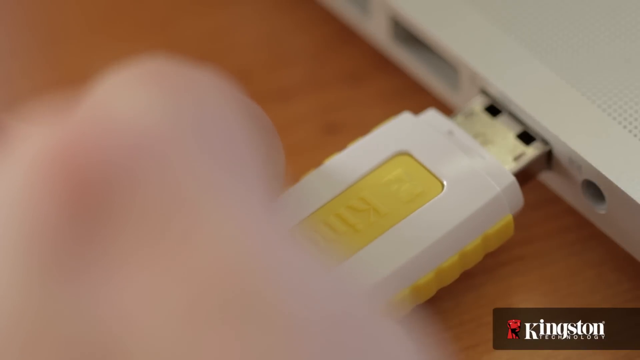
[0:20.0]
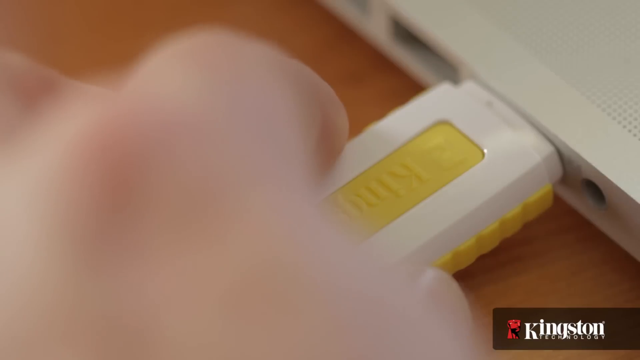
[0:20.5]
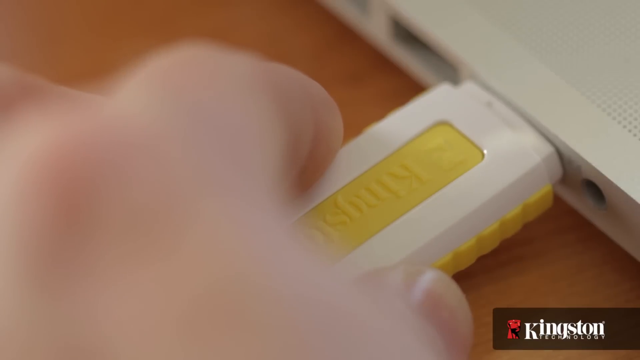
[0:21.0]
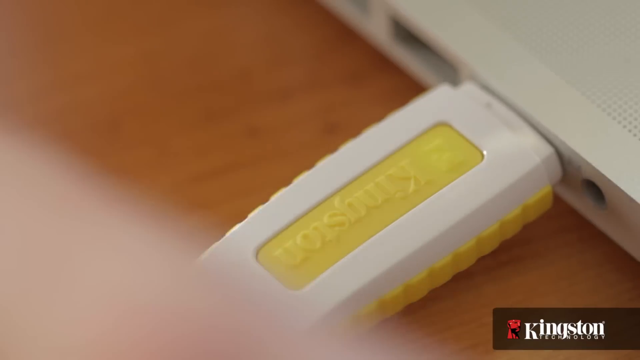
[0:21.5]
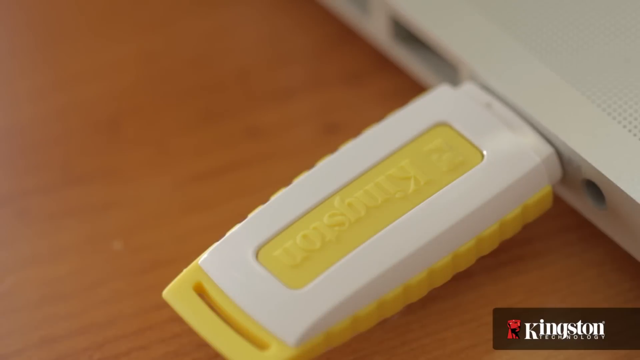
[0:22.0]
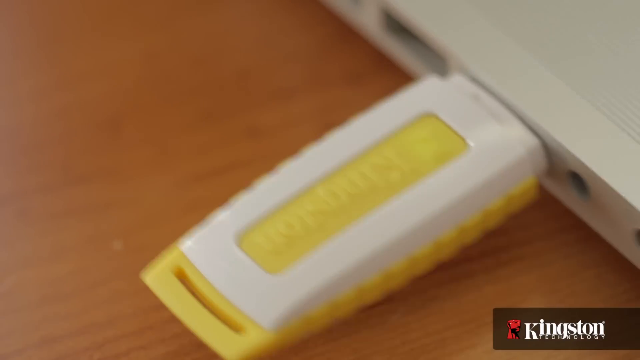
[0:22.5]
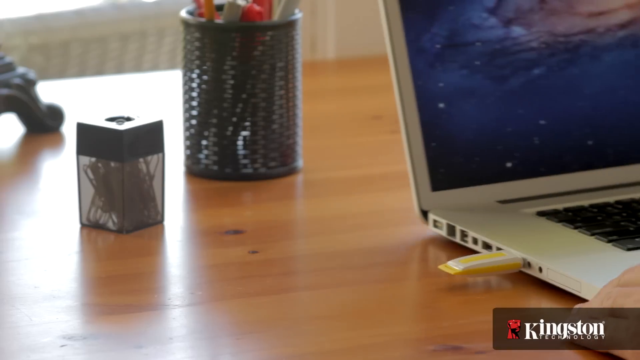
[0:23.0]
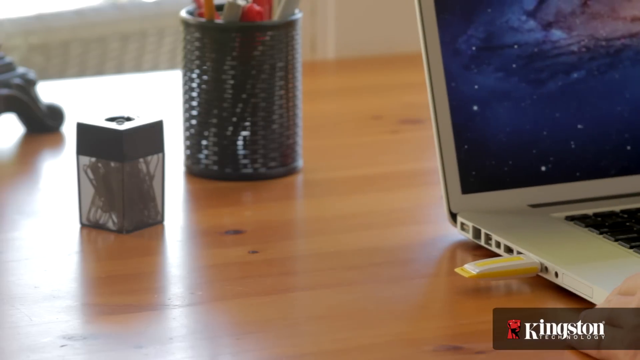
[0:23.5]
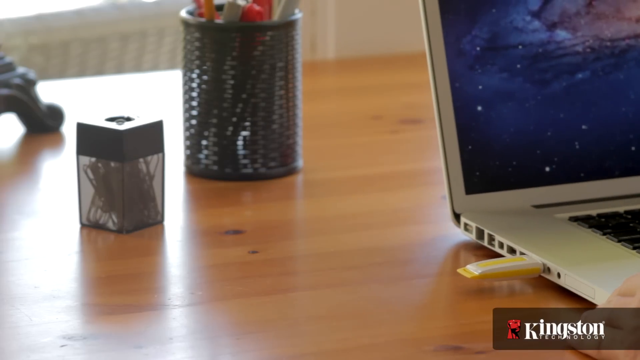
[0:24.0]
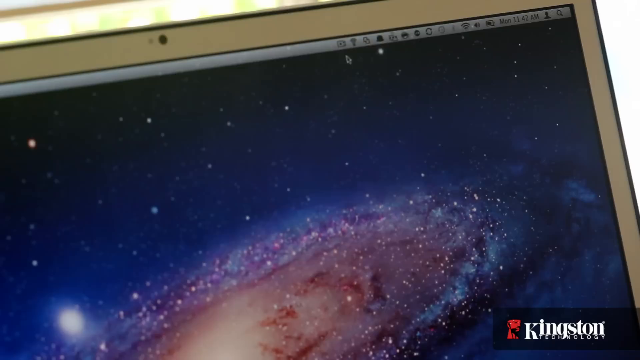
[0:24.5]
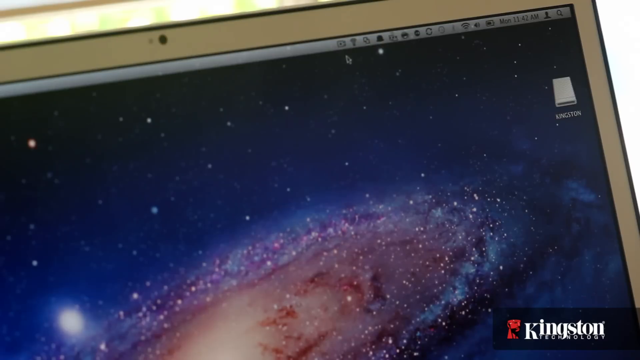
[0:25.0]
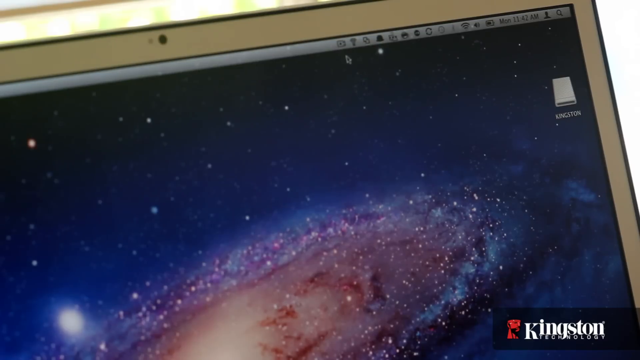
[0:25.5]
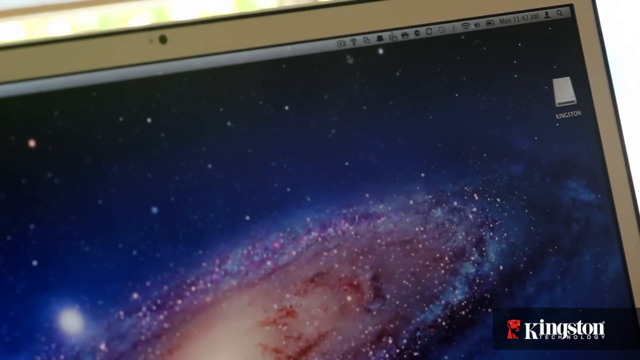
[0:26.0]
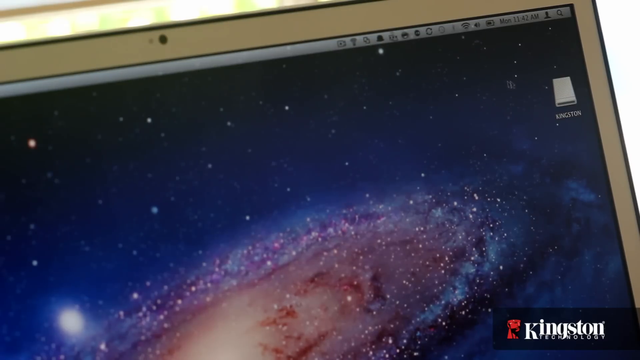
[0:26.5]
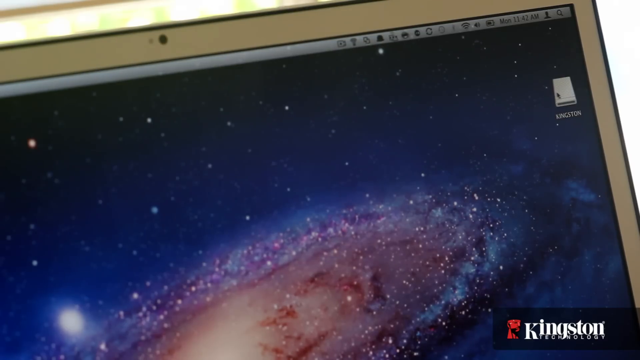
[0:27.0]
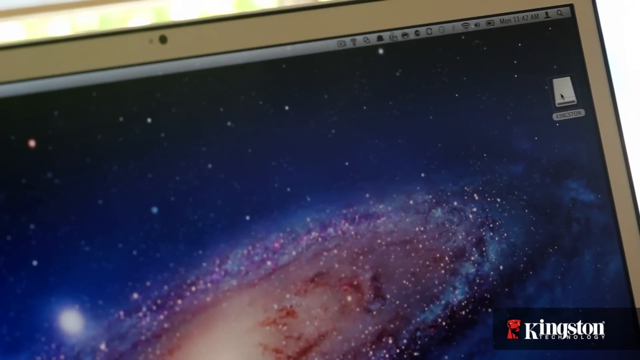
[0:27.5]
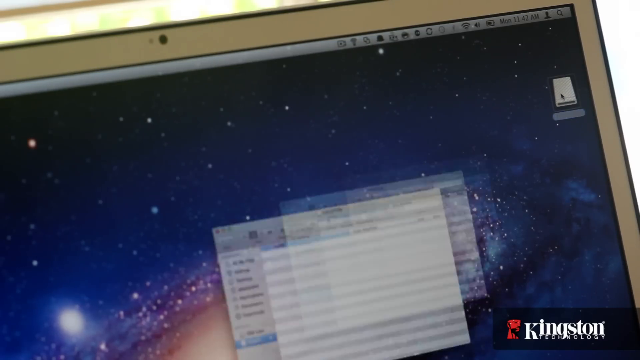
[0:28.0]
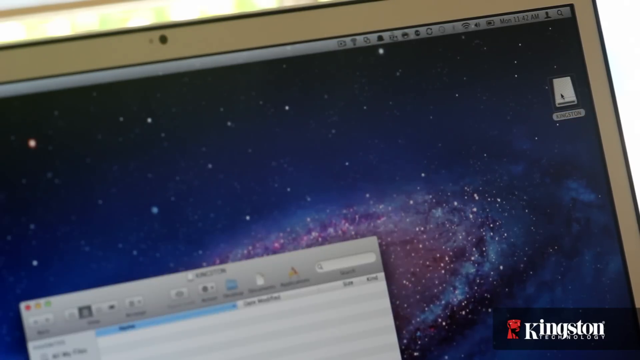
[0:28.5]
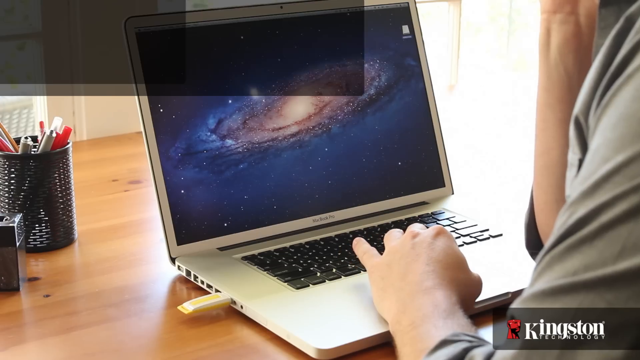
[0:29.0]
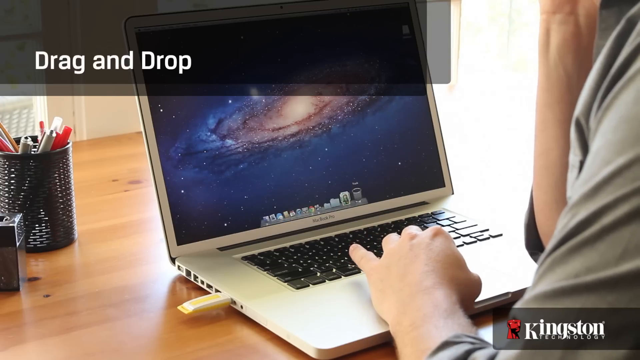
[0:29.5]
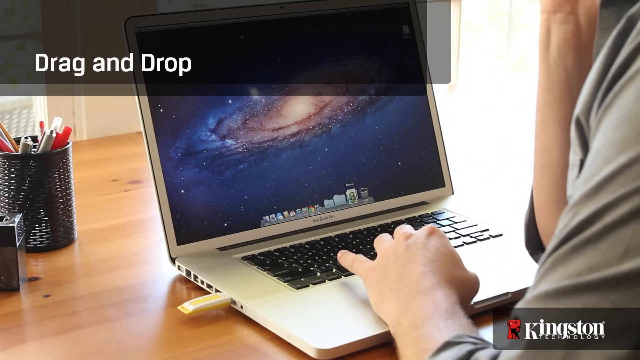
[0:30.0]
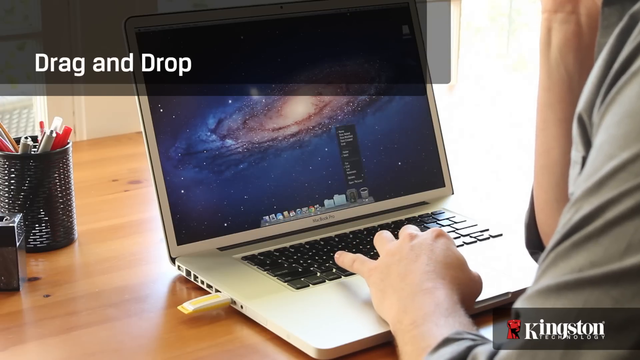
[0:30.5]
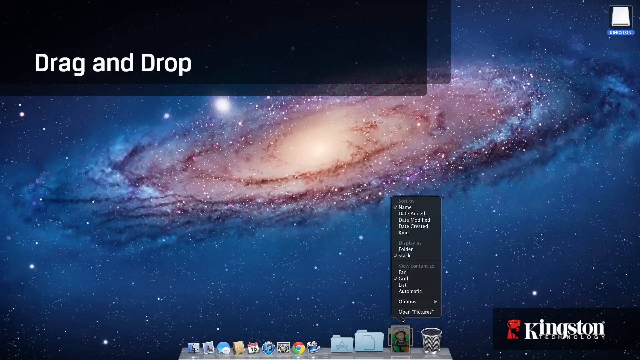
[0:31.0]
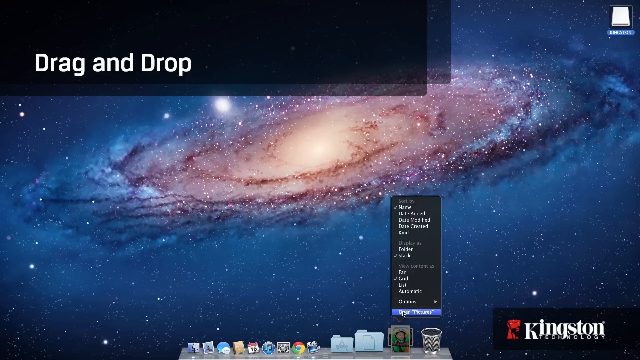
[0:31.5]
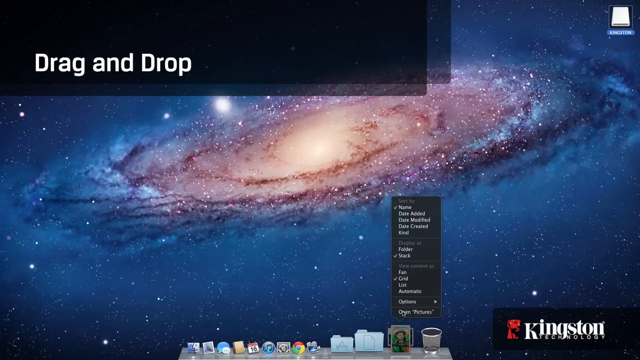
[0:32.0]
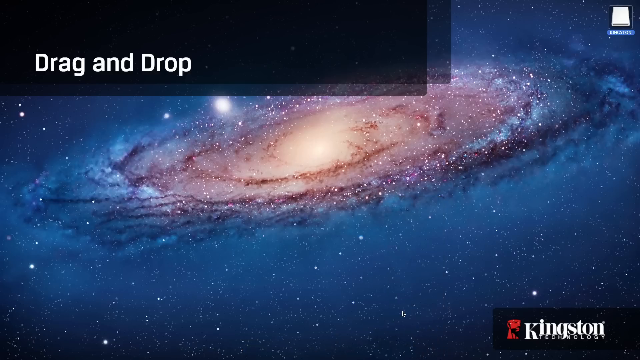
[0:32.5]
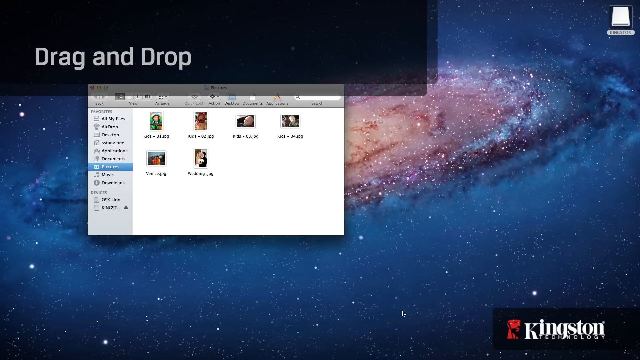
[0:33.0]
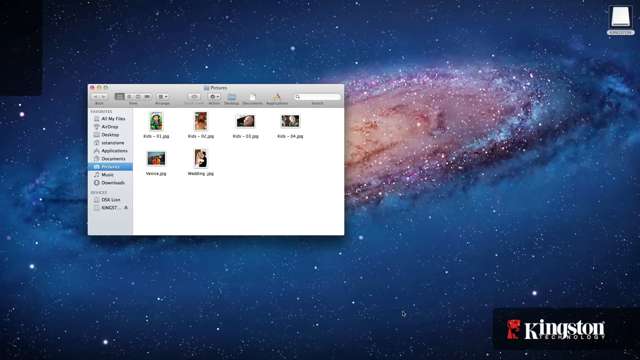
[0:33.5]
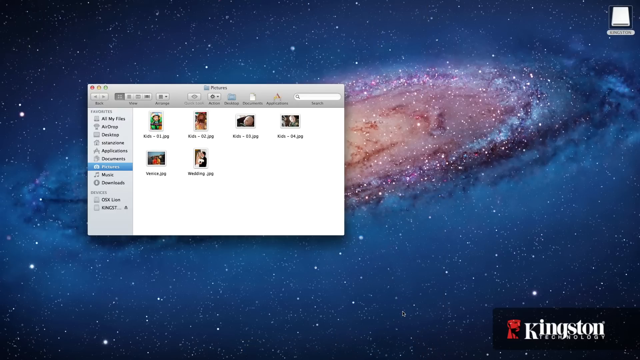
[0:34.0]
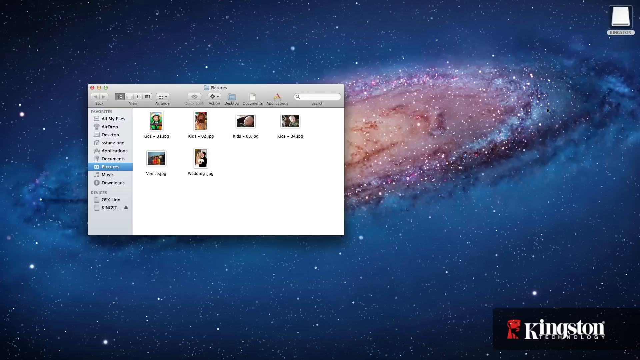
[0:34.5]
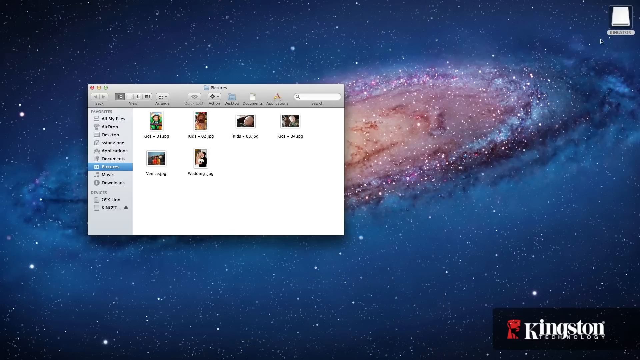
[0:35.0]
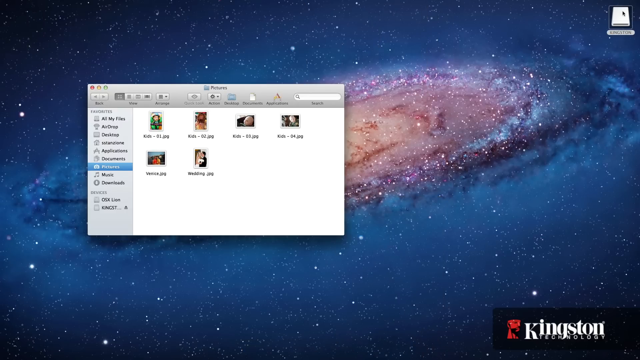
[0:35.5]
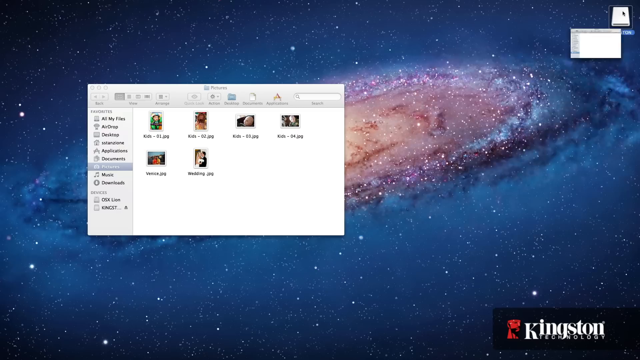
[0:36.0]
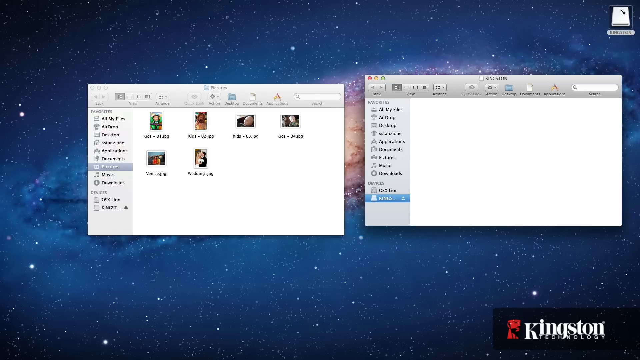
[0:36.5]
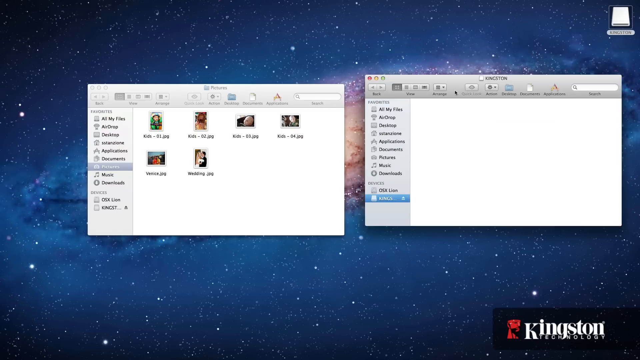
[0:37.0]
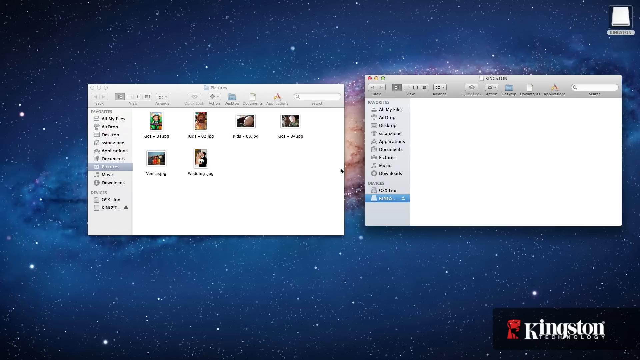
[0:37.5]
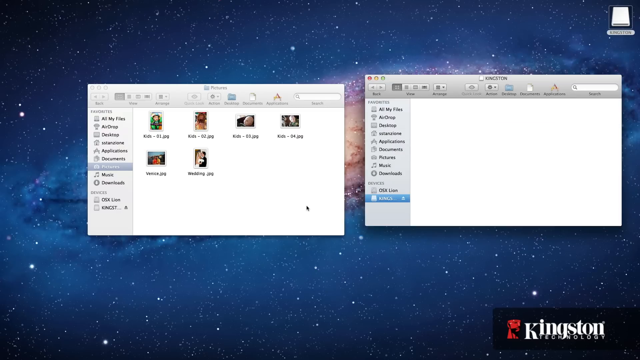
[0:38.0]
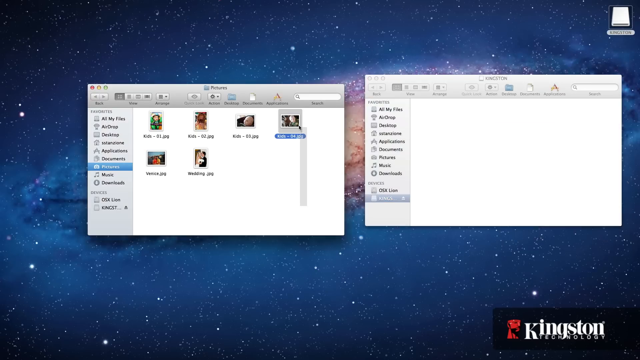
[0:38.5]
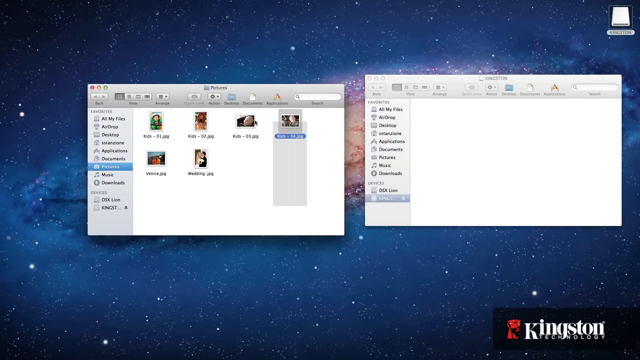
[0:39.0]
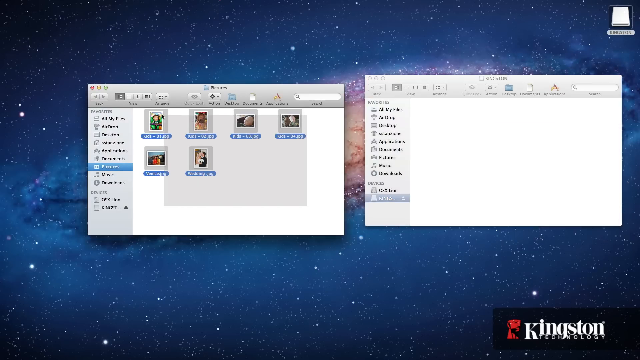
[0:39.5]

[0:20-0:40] A person's hand pushes a USB drive into a laptop, and as soon as it goes in, a light flashes on the side of the USB. An app pops up that says "drag and drop." Using the cursor, someone opens another box on the computer containing files with labels such as "kids," "01.JPG" and "wedding pictures," along with various others. They highlight all of the pictures and click and drag them over onto a blank pop-up that has nothing in it. A menu on the side reads "all my files," "airdrop" and "desktop," continuing down, with areas for music, downloads and photos.